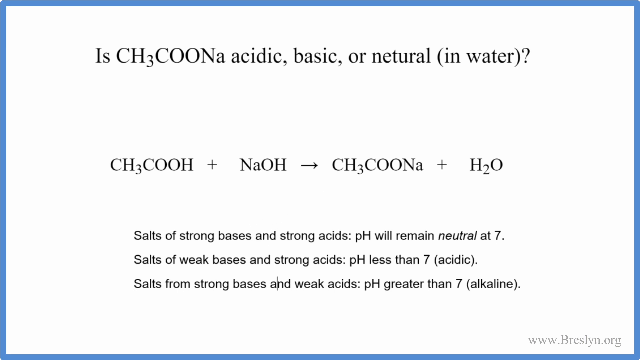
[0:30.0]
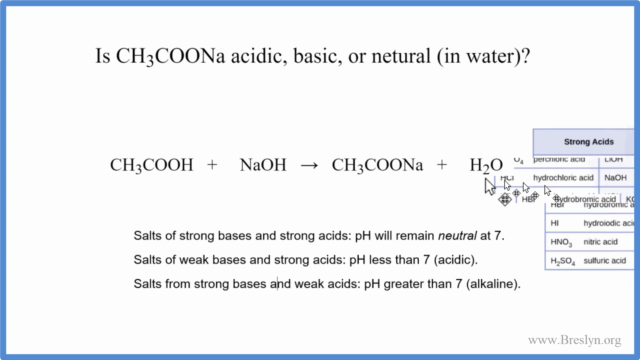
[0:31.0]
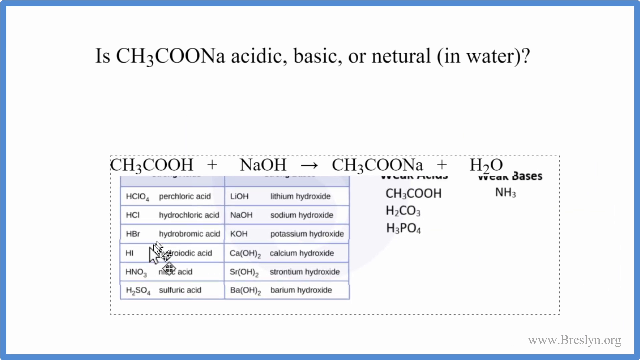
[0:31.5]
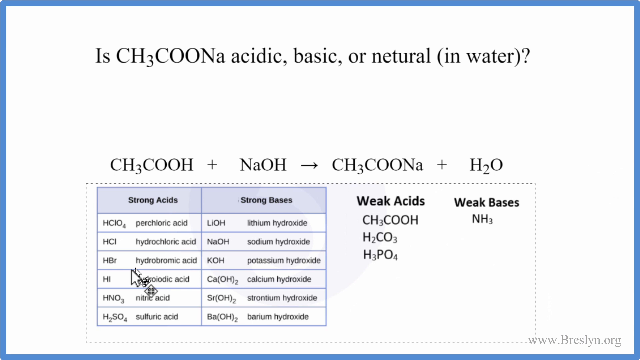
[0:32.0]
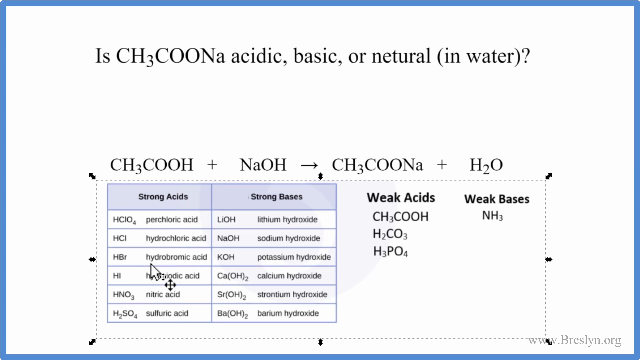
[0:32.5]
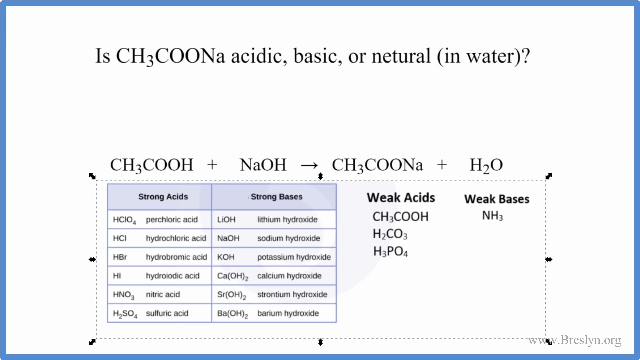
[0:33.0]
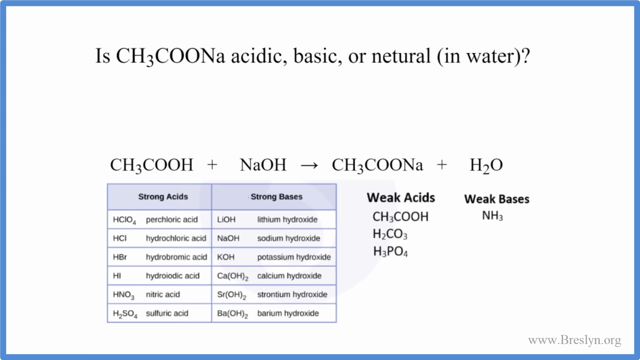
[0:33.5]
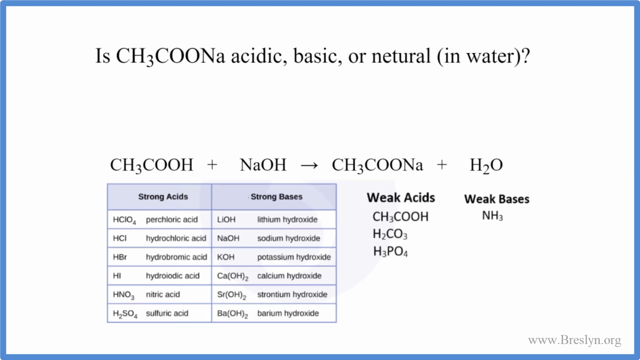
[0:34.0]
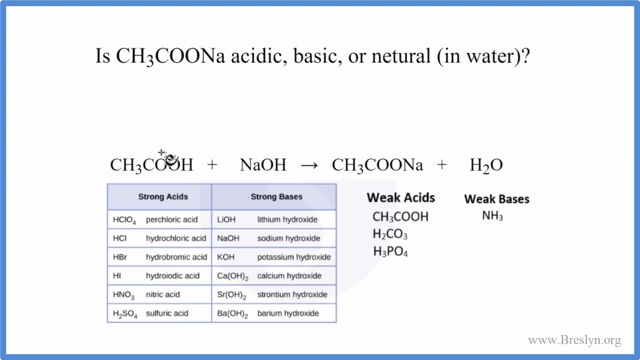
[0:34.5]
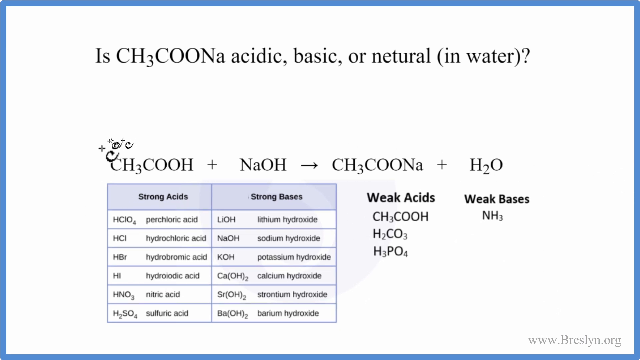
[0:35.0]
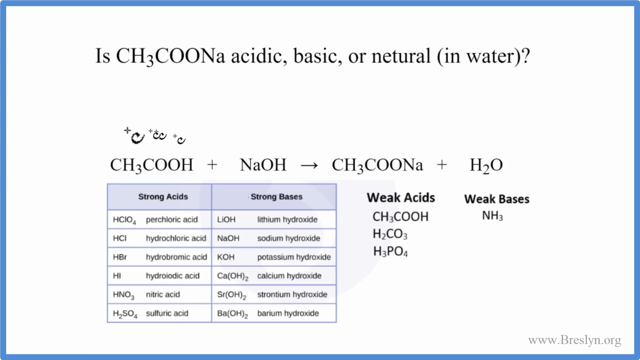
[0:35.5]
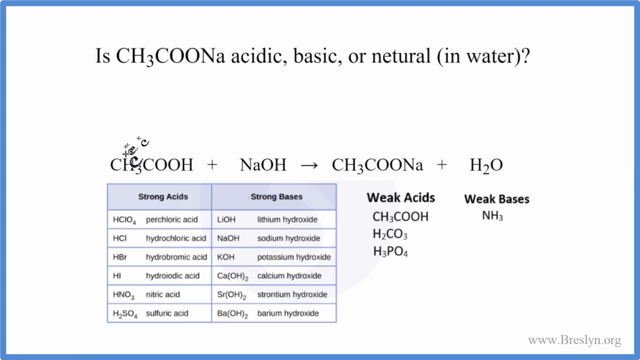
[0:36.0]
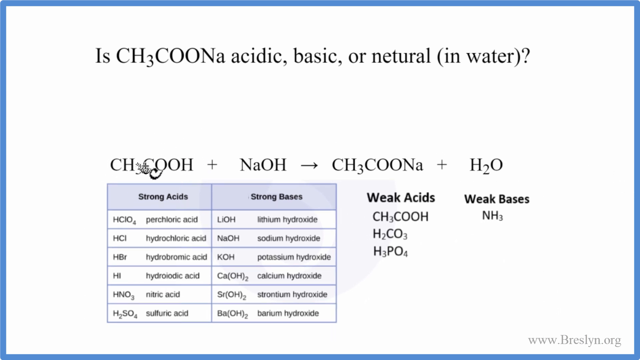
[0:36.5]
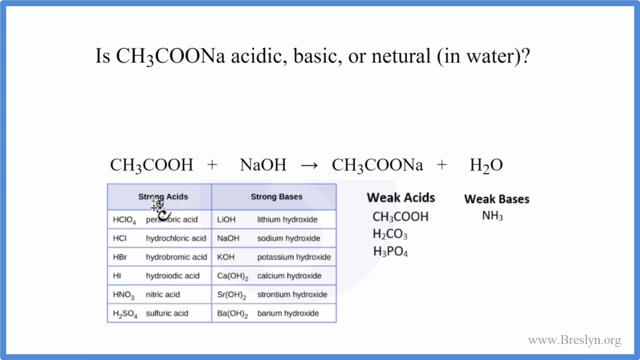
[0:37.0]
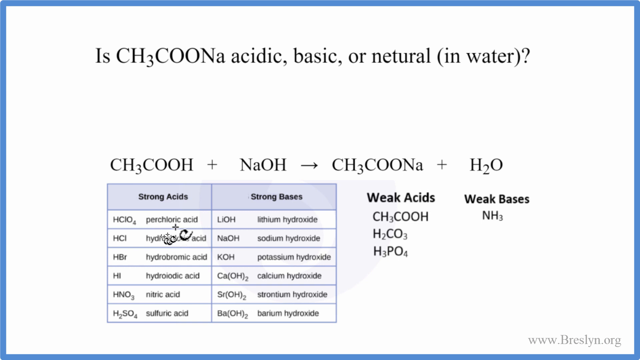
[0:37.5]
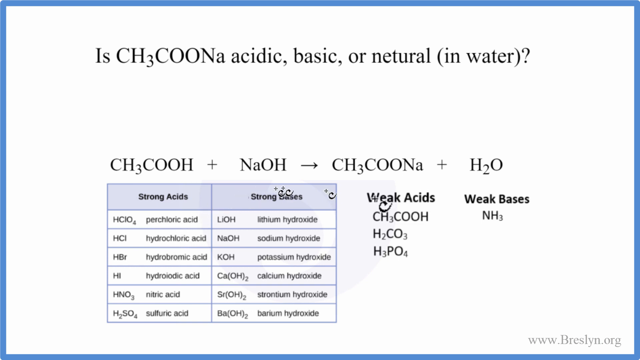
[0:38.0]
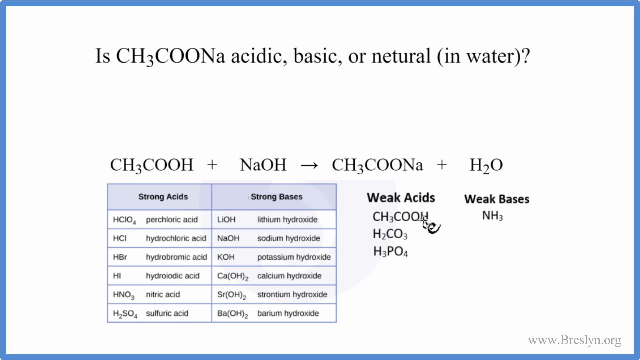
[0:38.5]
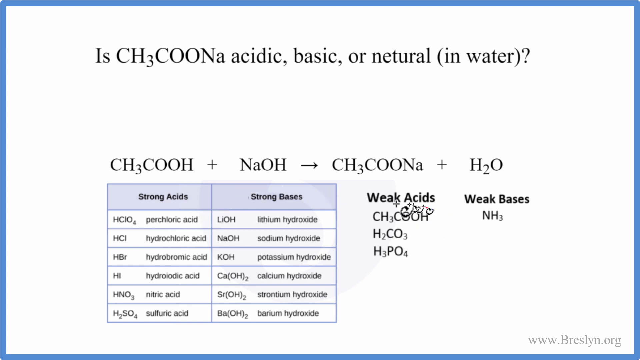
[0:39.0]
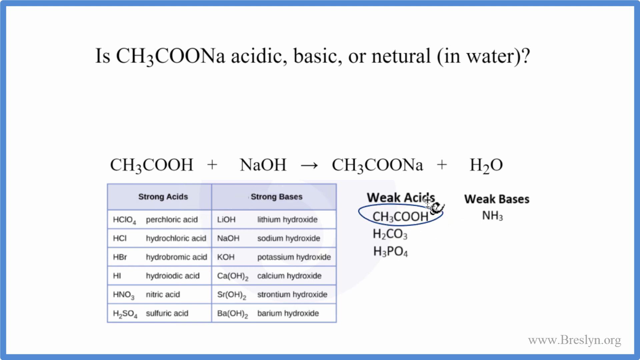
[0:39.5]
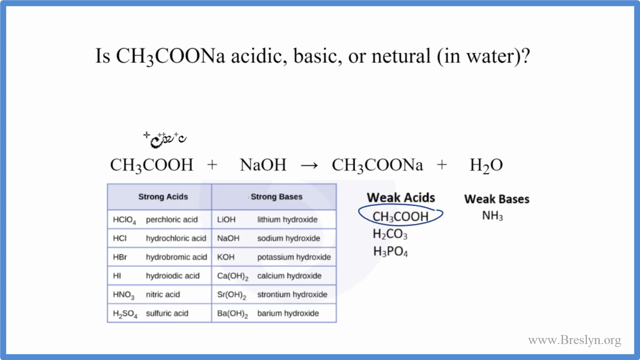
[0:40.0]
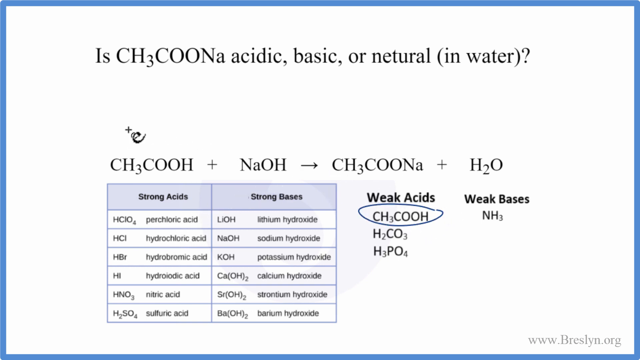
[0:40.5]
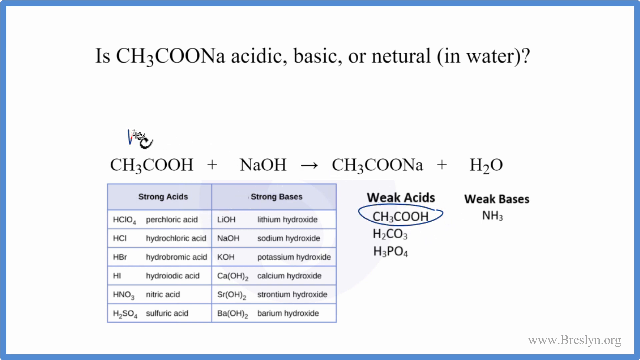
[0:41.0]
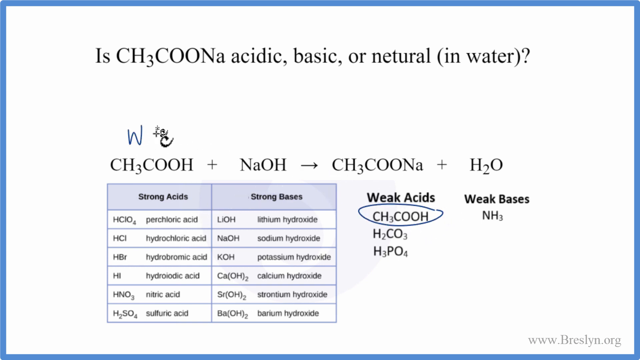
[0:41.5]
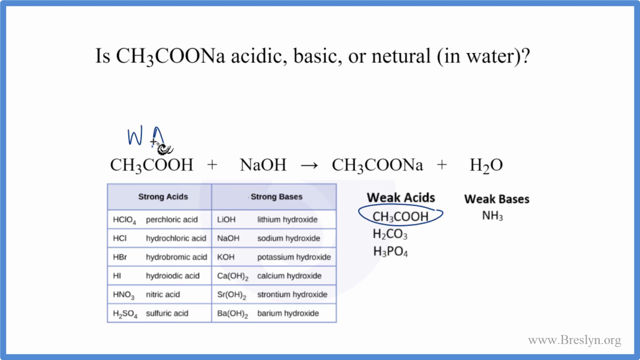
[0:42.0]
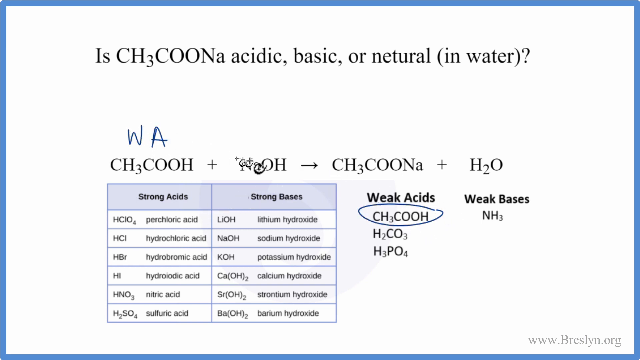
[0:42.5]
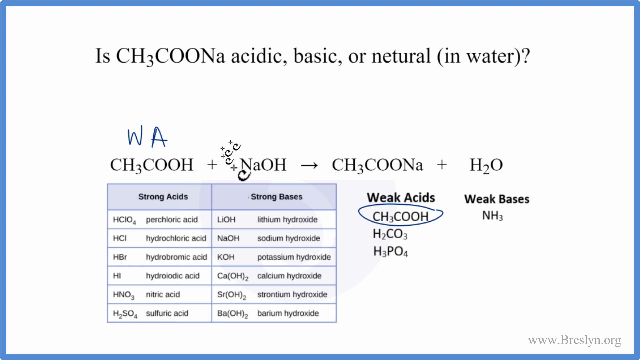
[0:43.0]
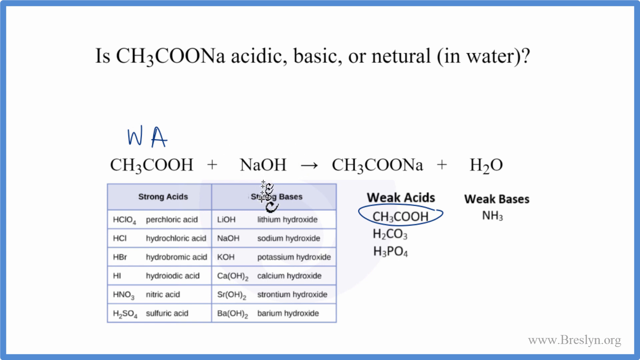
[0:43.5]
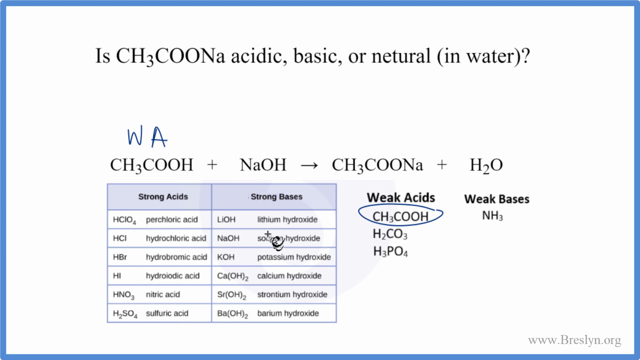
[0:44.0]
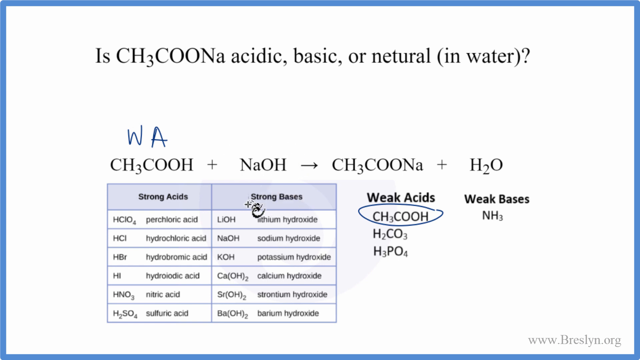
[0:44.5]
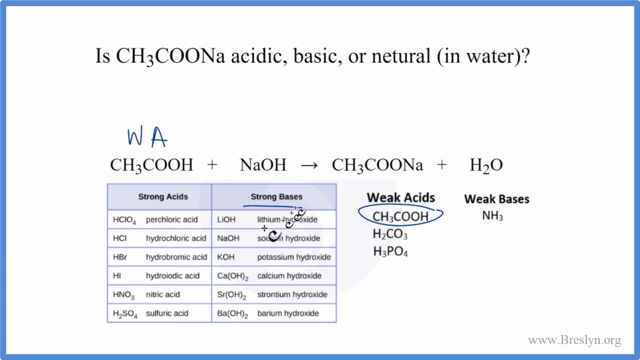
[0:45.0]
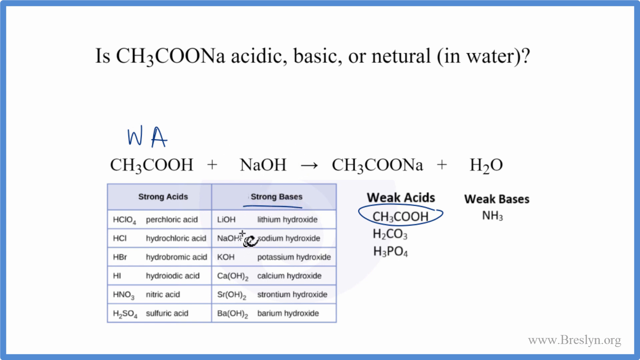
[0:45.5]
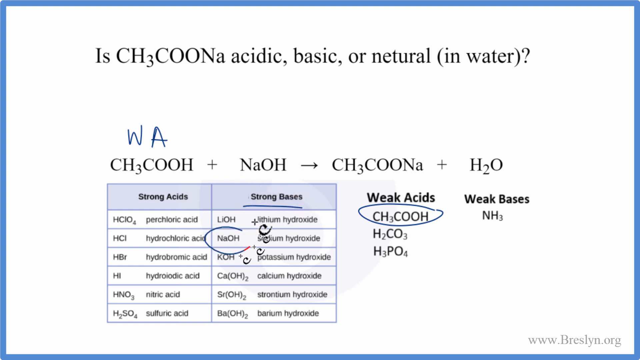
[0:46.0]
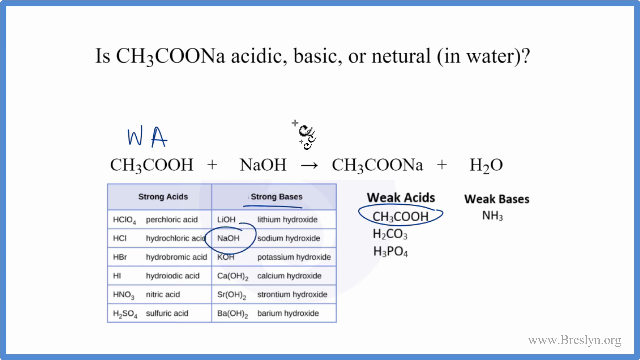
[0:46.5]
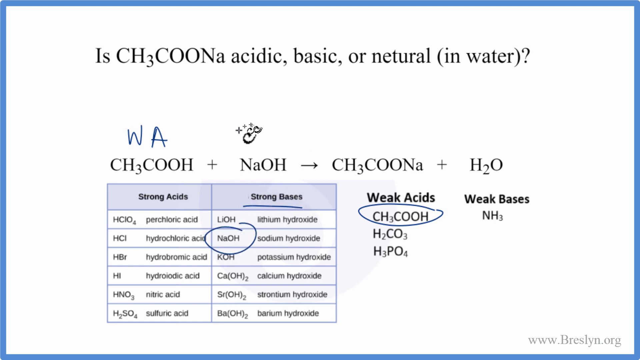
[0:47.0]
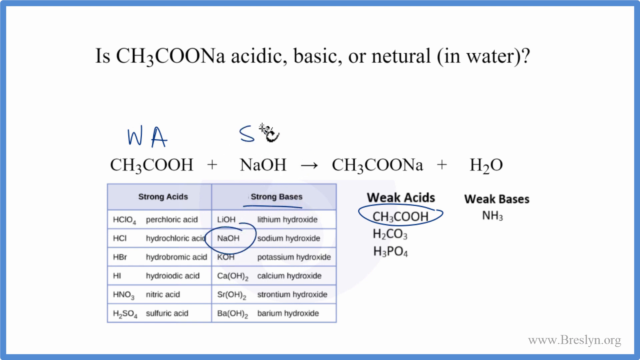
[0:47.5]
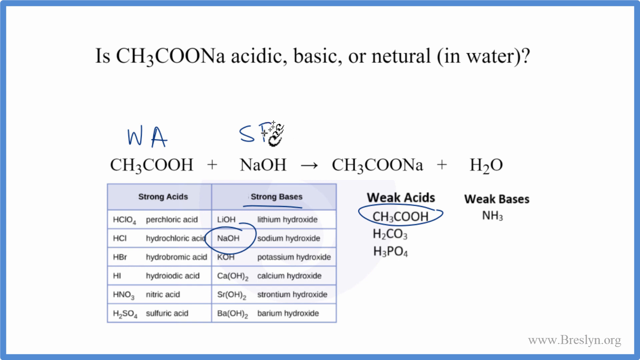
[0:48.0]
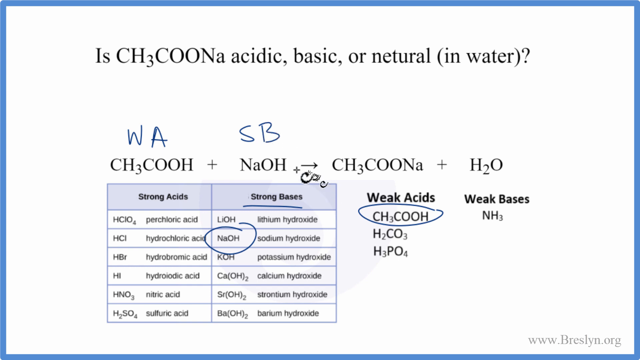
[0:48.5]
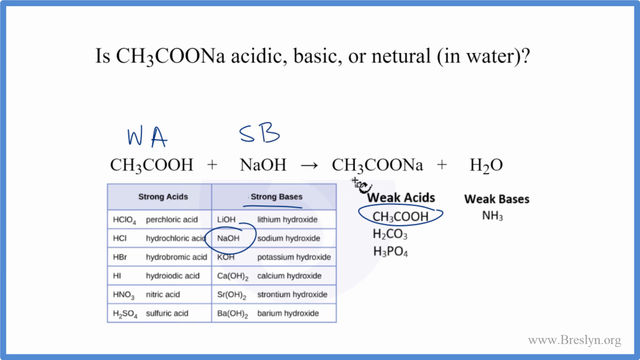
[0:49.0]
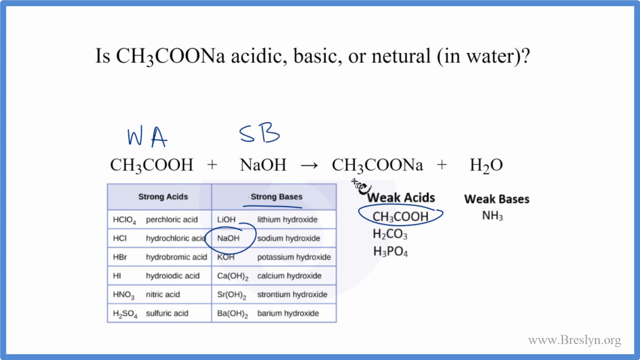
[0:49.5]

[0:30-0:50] A table appears as a sort of summary chart of the subject matter, with two columns and seven rows. Under Strong Acids it lists perchloric acid, hydrochloric acid, hydrobromic acid, hydroiodic acid, nitric acid and sulfuric acid with their chemical formulas; under Strong Bases it lists lithium hydroxide, sodium hydroxide, potassium hydroxide, calcium hydroxide, strontium hydroxide and barium hydroxide, also with their chemical formulas. A sort of cursor moves, underlining as the reasoning is explained. Next to the table are the weak acids, CH3COOH, H2CO3 and H3PO4, and the weak bases, NH3. With a pen, the presenter underlines CH3COOH and writes "W" on top for weak acids, then puts "SB" on top of the NH3, meaning strong bases.